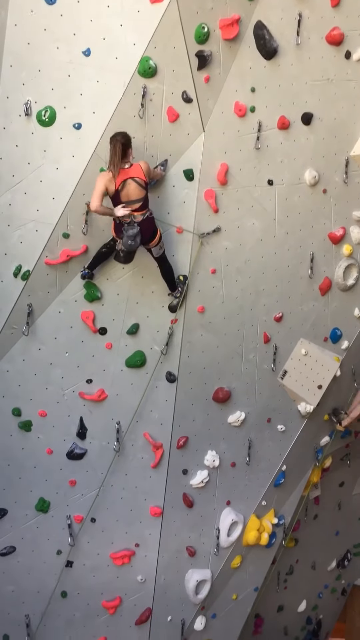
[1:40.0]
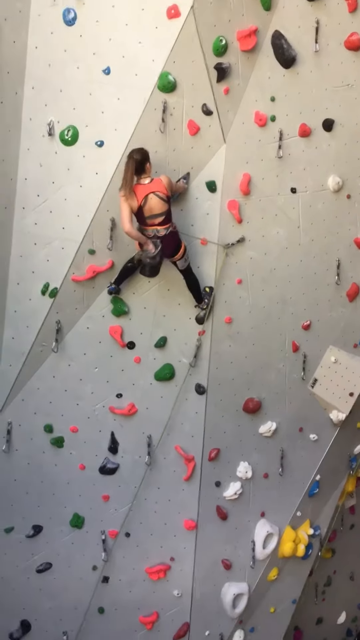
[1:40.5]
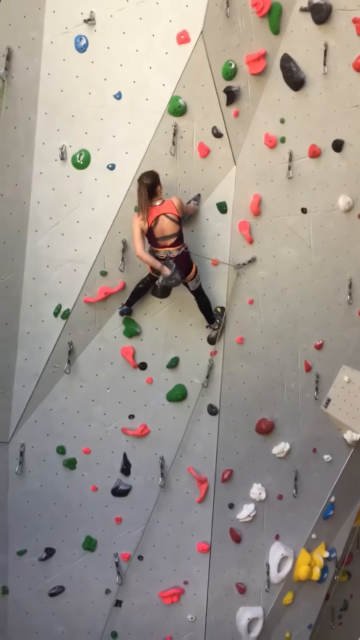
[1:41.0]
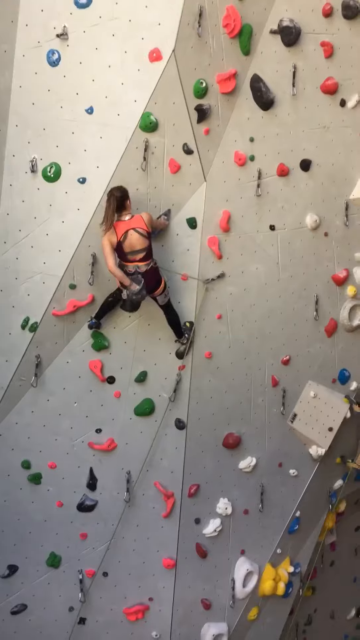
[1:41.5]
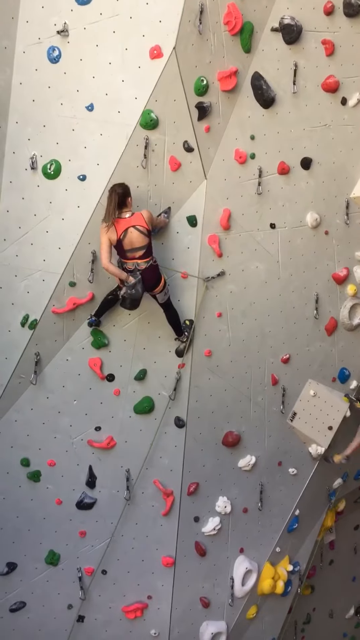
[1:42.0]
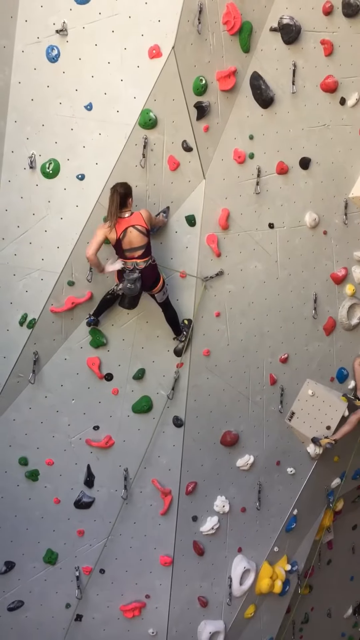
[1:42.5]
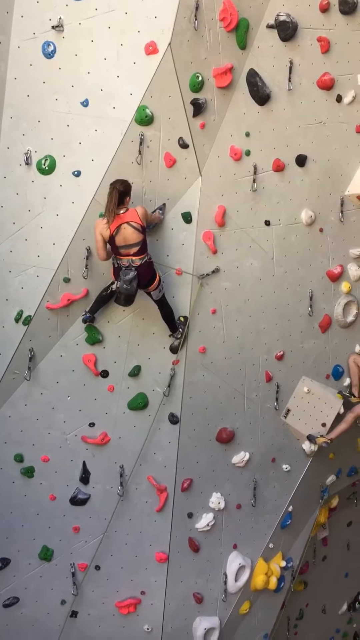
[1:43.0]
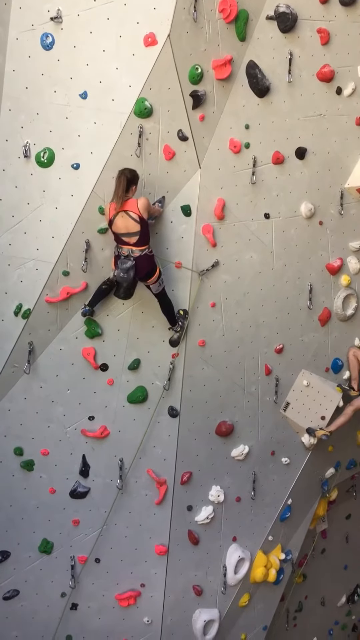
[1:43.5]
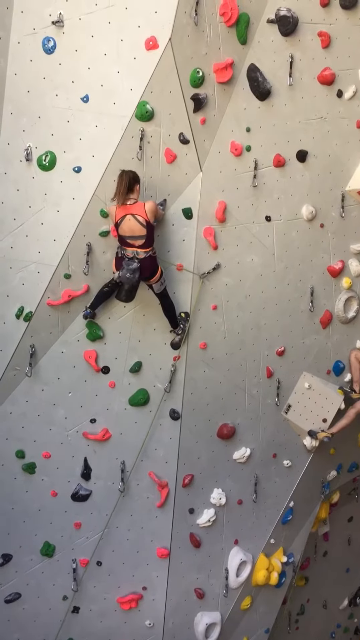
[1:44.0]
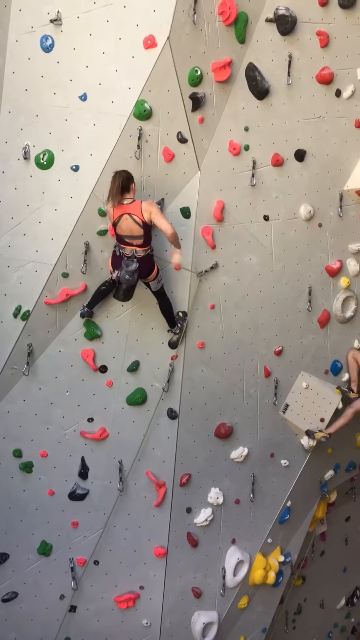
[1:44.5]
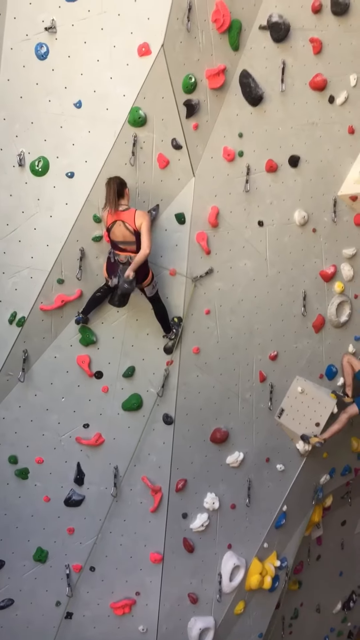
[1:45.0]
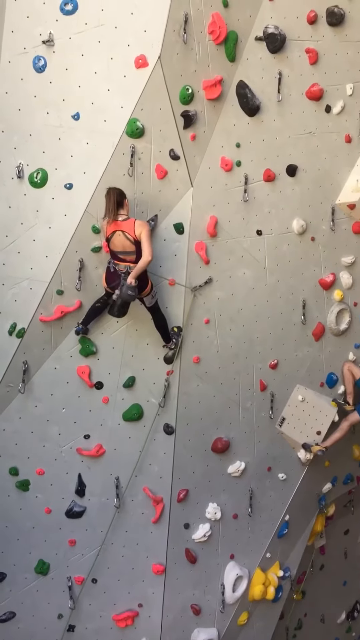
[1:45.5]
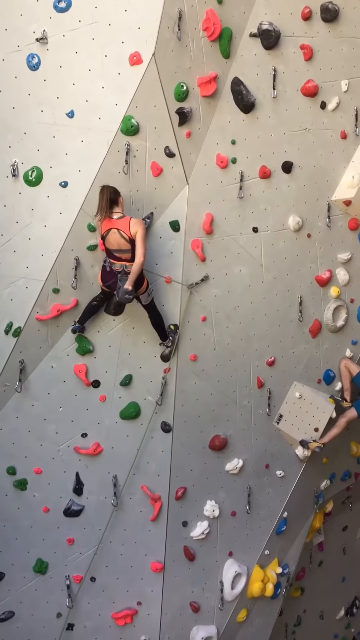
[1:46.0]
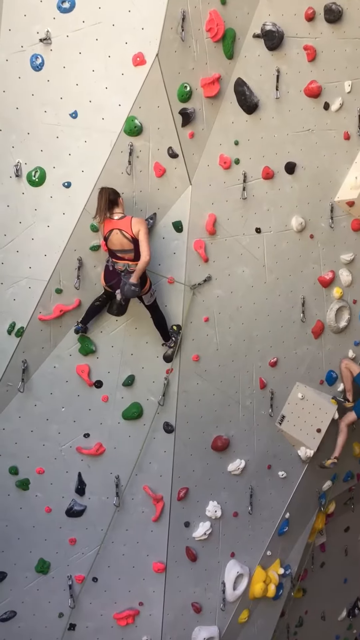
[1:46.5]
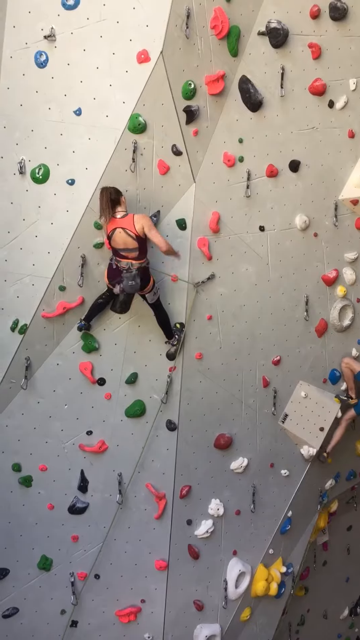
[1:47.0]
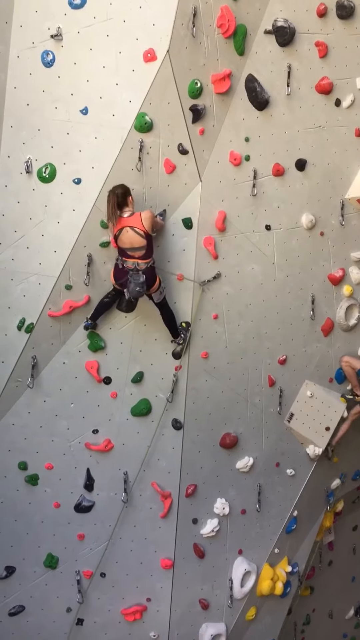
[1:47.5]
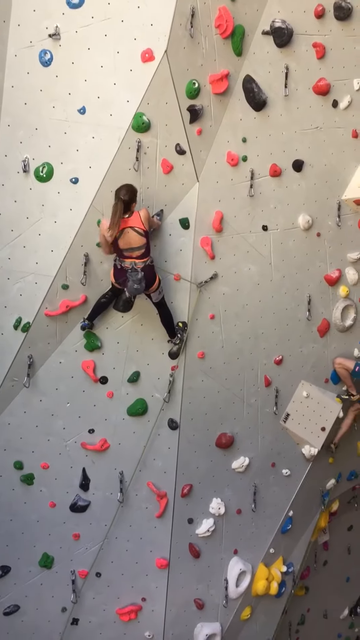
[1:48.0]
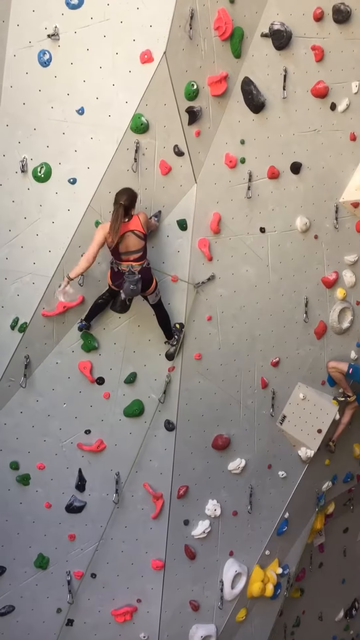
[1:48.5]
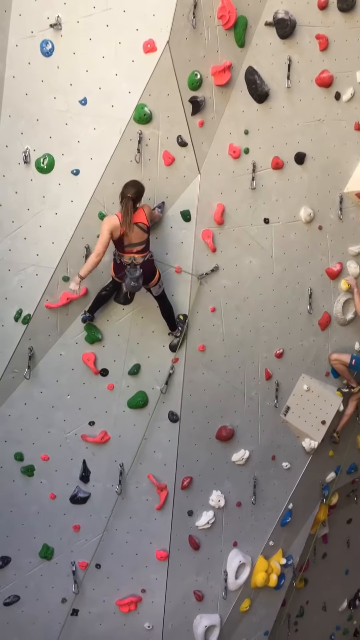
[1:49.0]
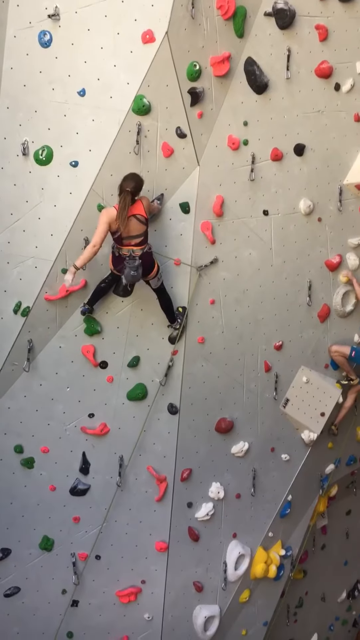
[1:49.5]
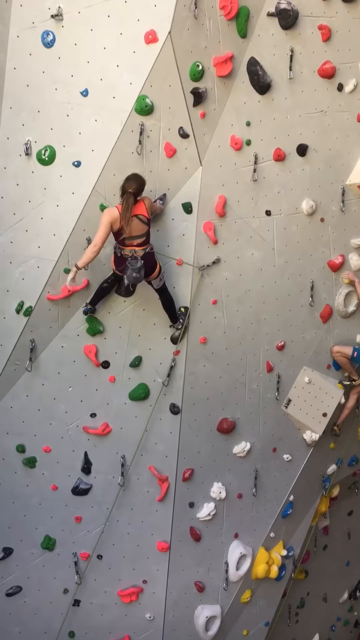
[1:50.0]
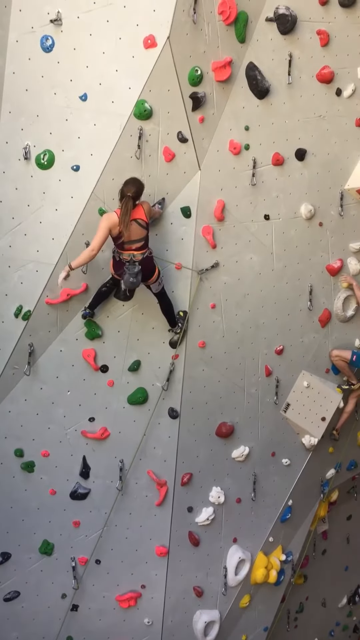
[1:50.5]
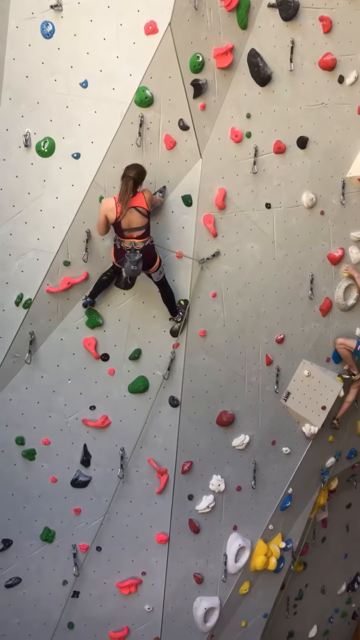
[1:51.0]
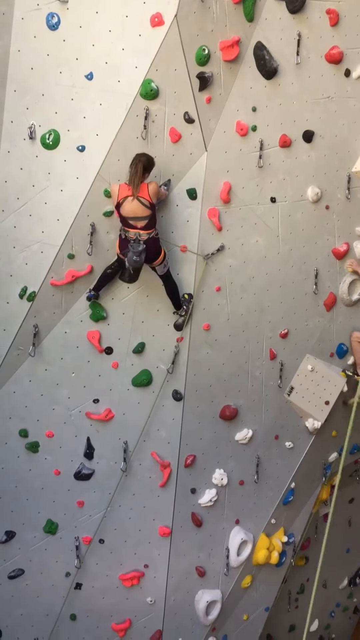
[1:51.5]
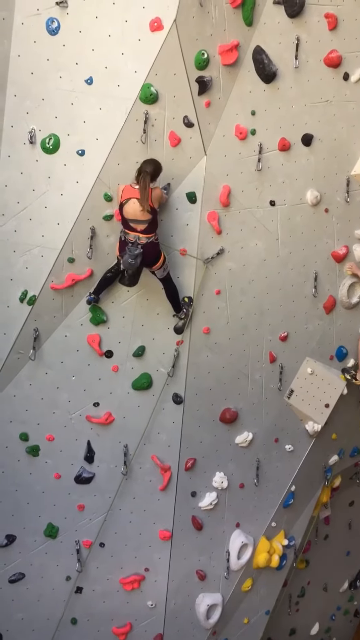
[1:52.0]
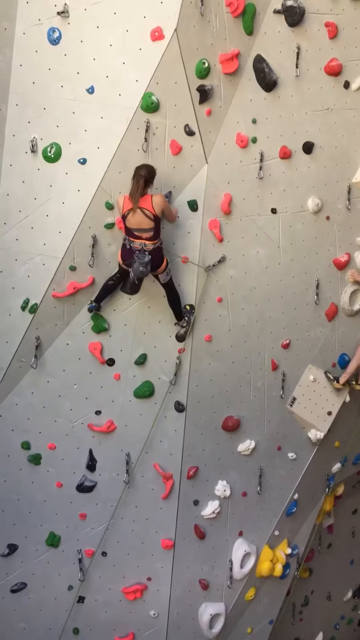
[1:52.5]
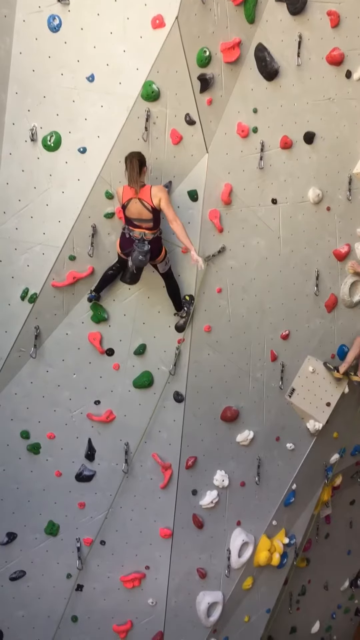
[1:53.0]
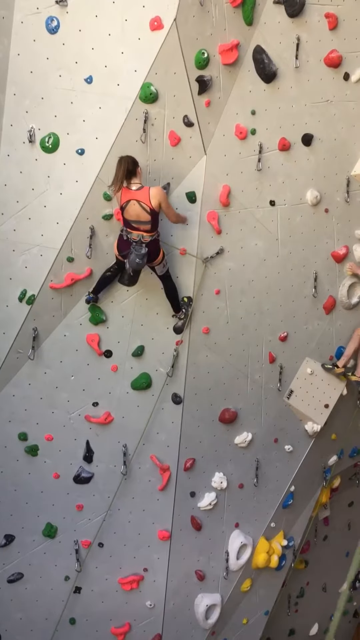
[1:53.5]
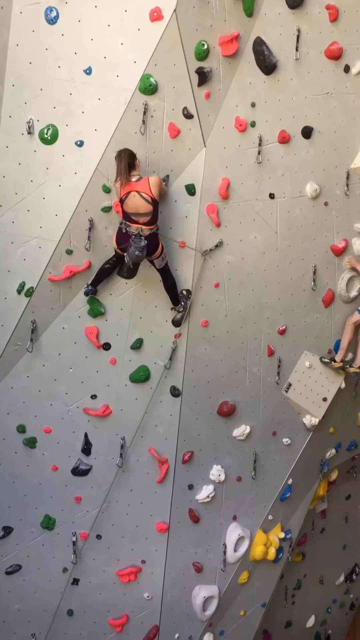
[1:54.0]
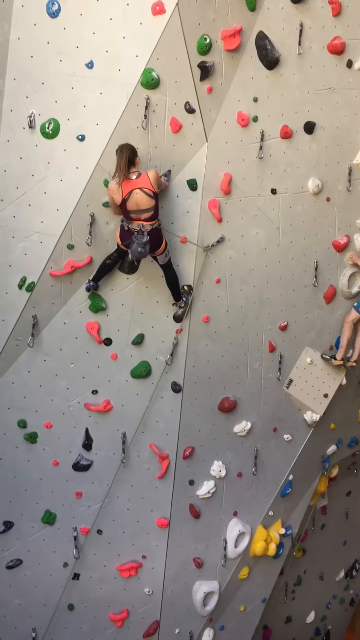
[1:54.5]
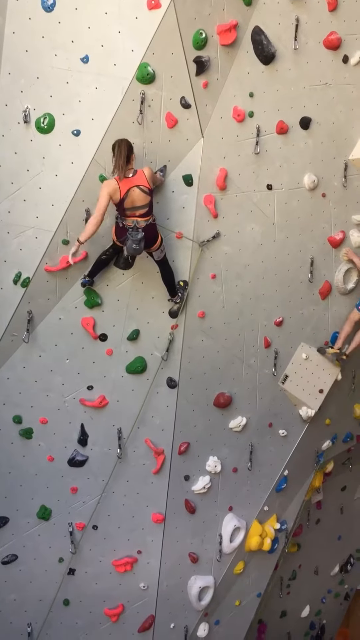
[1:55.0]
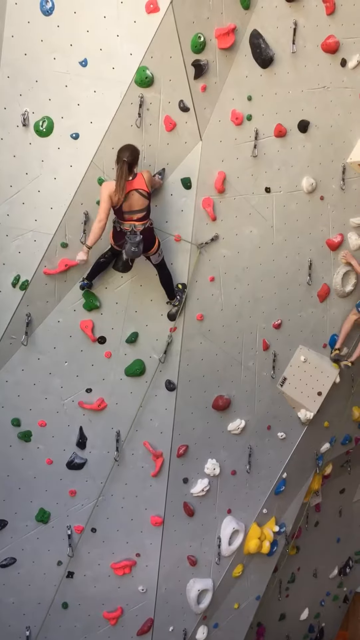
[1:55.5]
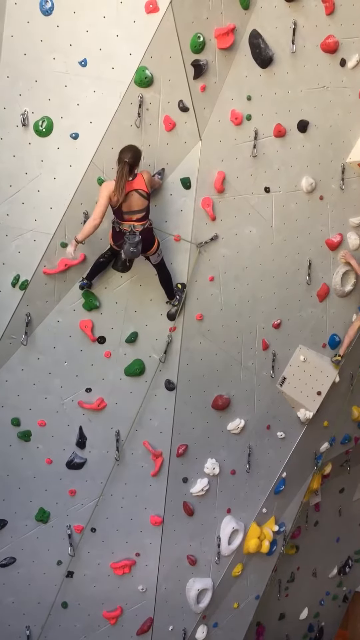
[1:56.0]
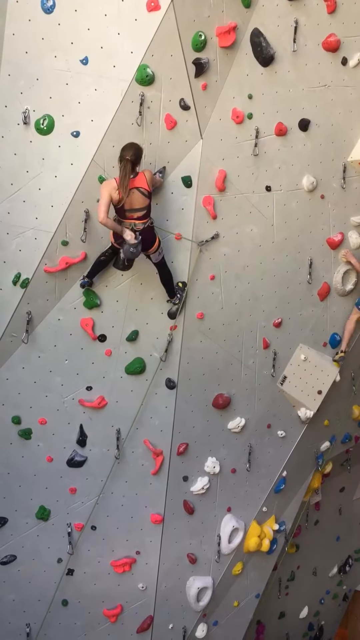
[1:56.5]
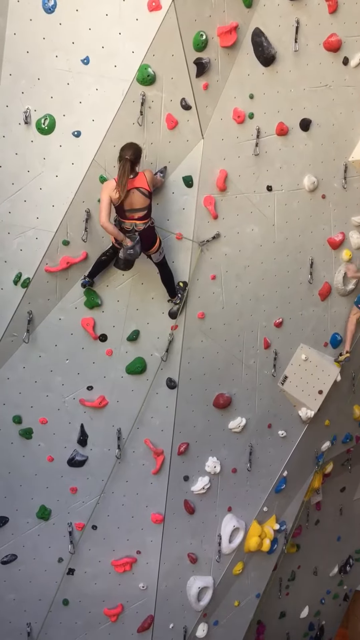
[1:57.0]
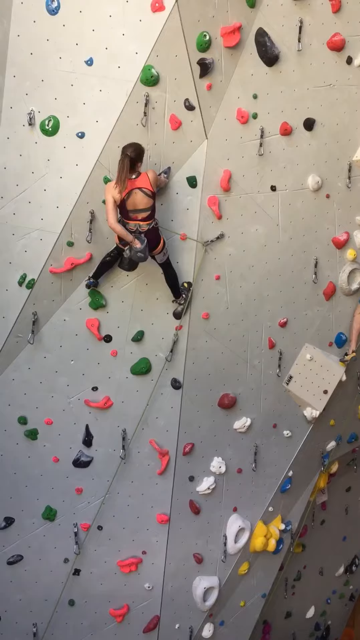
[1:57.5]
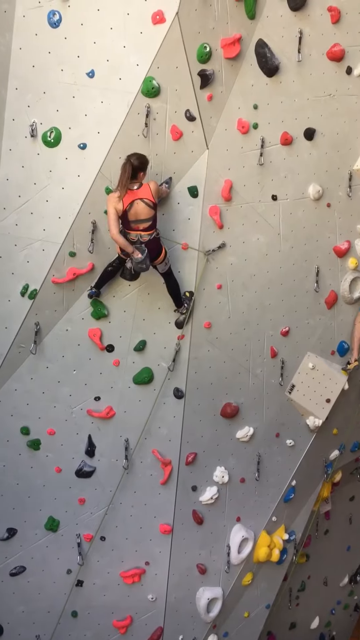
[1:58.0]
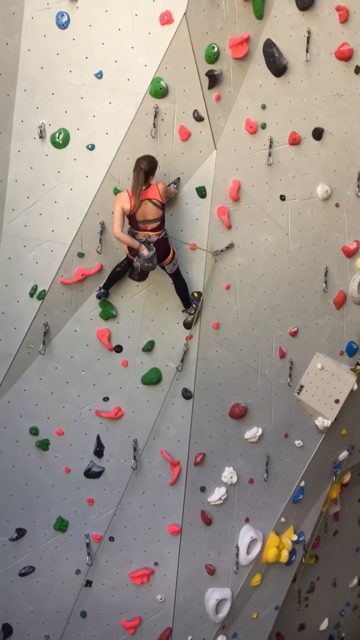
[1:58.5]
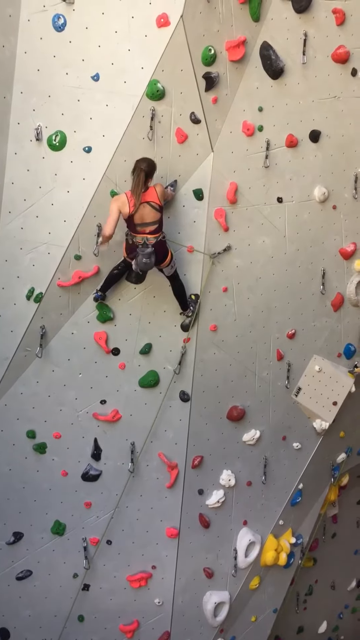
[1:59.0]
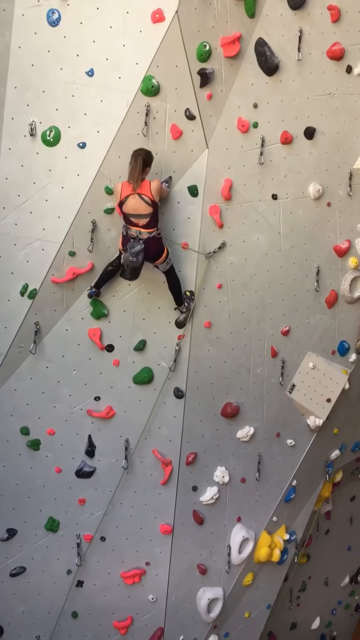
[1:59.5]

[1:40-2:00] A woman climbs a climbing wall with green, pink, black, red, yellow, white, and blue pieces and chains. She wears a pink shirt and black spandex or pants. Facing the gray wall, she reaches with her left hand behind her back into the bag on her back, then brings her hand in front of her. She reaches into the bag again and brings her right hand out in front of her. She shakes her left hand behind her while her legs are spread on the black and green pieces to her sides. She shakes her right hand, then her left hand, and reaches into the bag behind her again with her left hand. In the lower right, someone is trying to climb toward the woman's position.